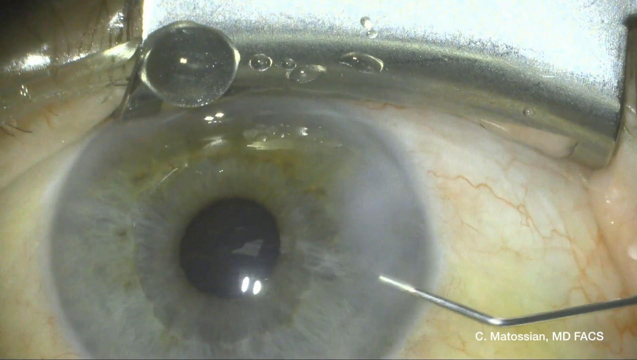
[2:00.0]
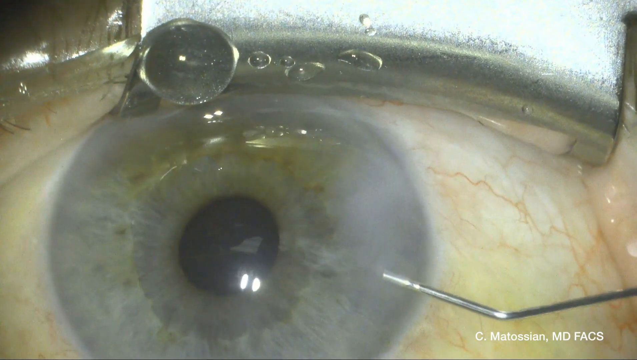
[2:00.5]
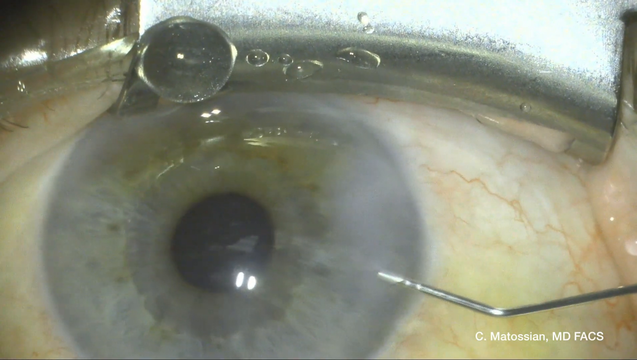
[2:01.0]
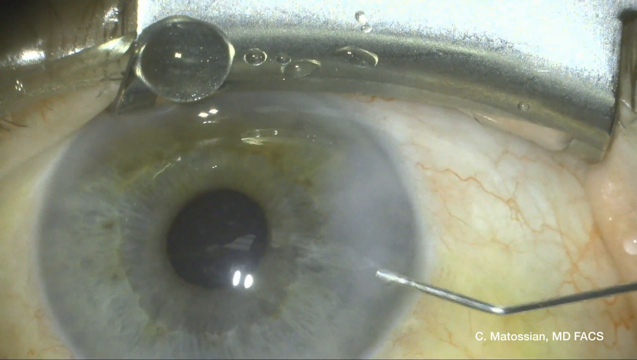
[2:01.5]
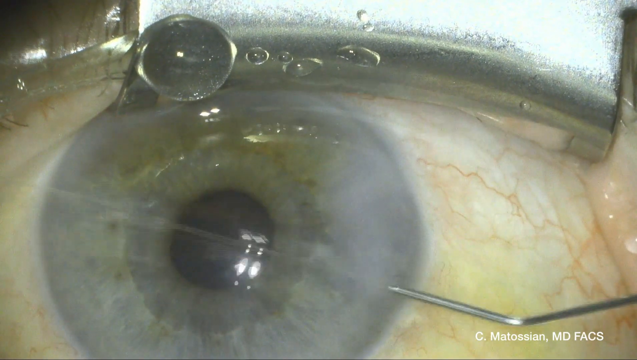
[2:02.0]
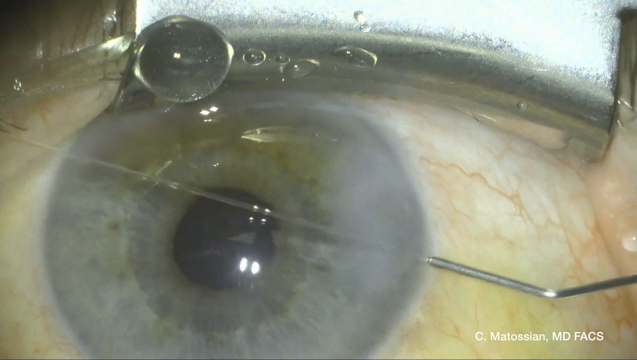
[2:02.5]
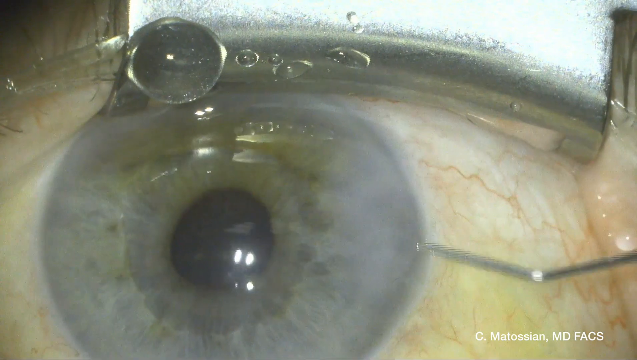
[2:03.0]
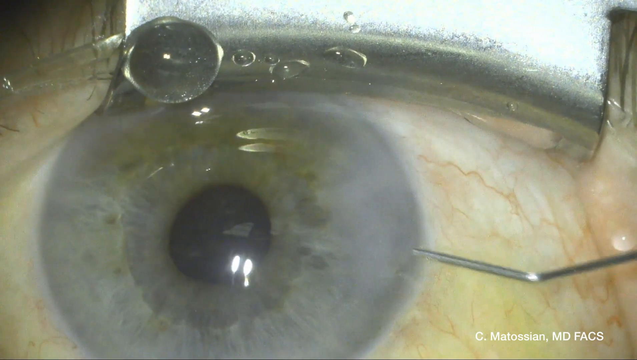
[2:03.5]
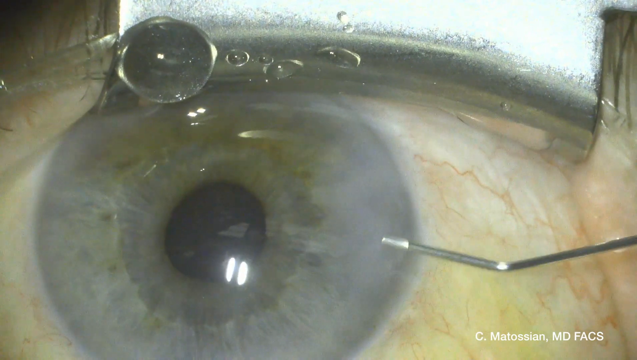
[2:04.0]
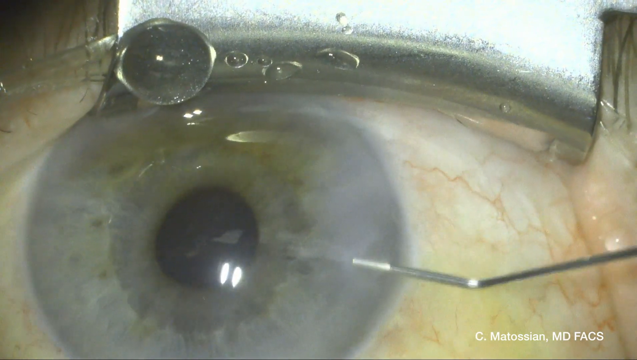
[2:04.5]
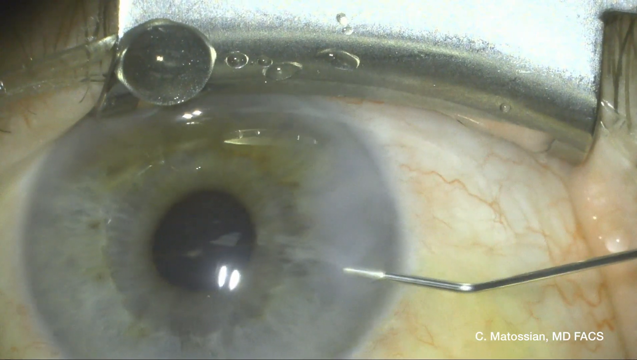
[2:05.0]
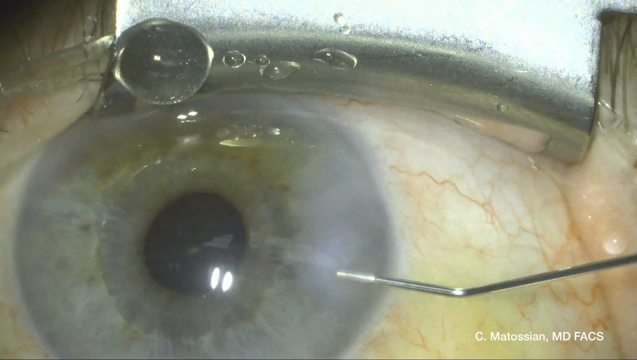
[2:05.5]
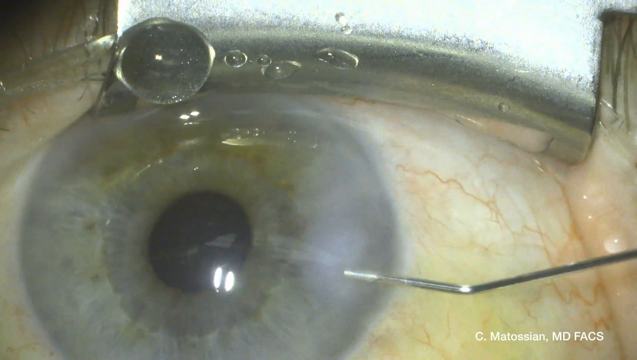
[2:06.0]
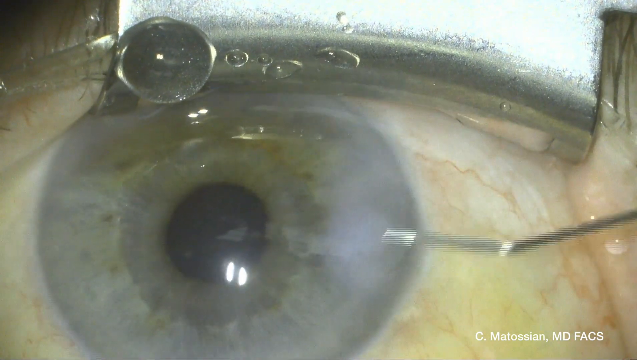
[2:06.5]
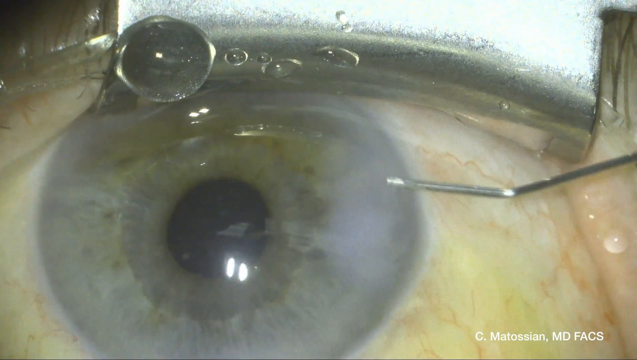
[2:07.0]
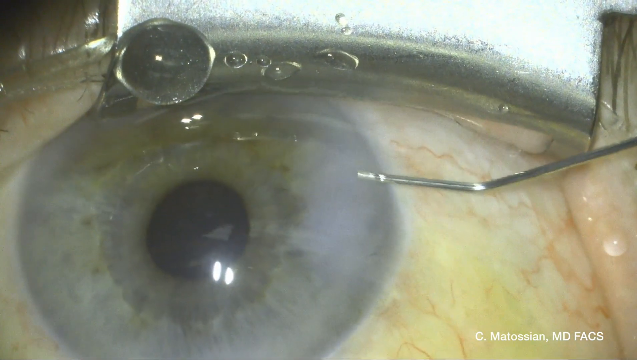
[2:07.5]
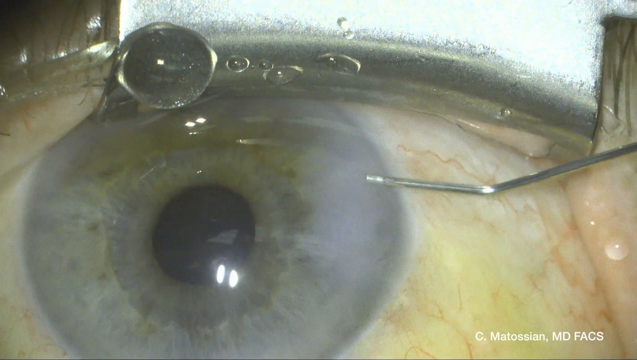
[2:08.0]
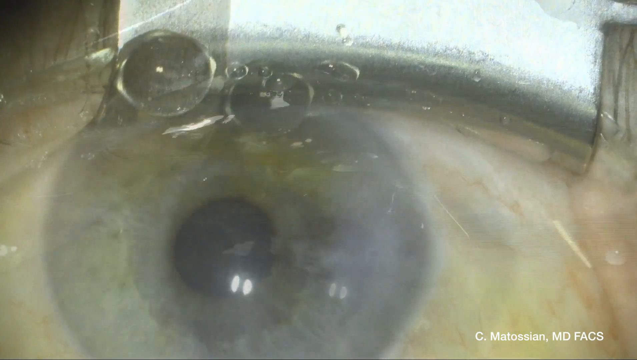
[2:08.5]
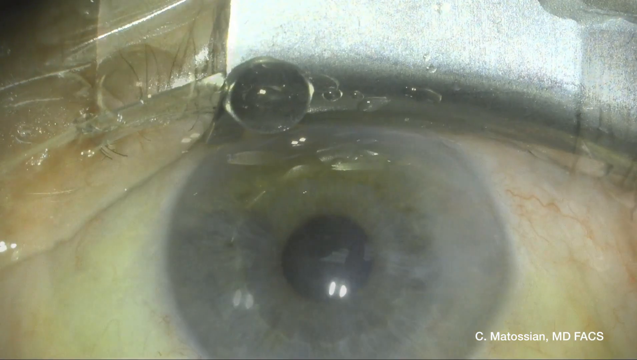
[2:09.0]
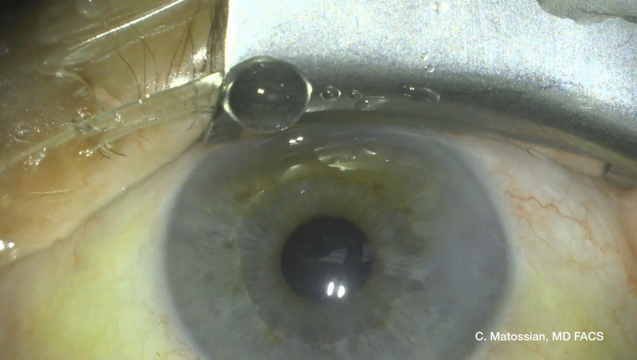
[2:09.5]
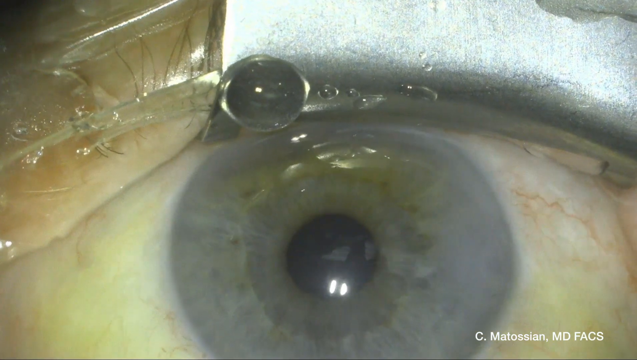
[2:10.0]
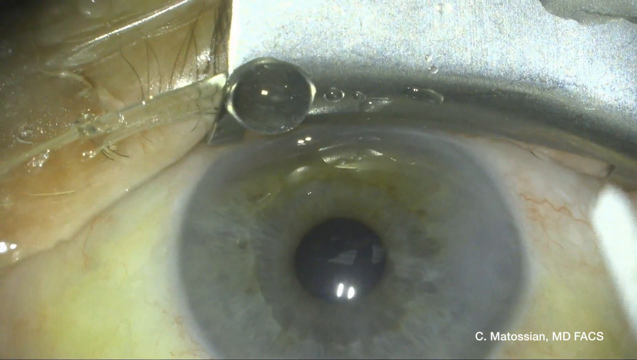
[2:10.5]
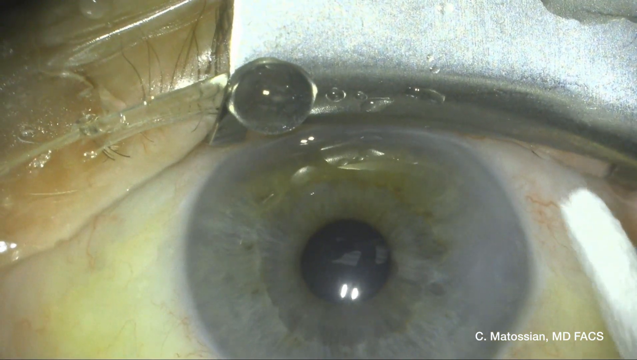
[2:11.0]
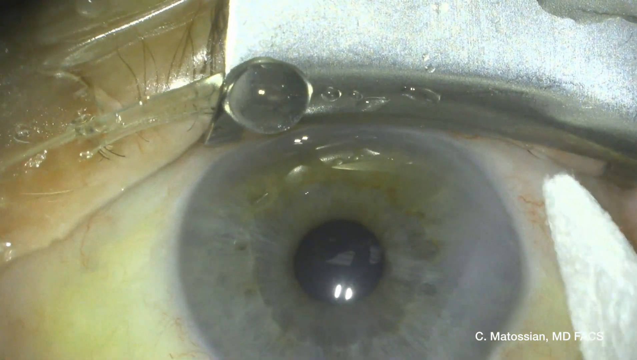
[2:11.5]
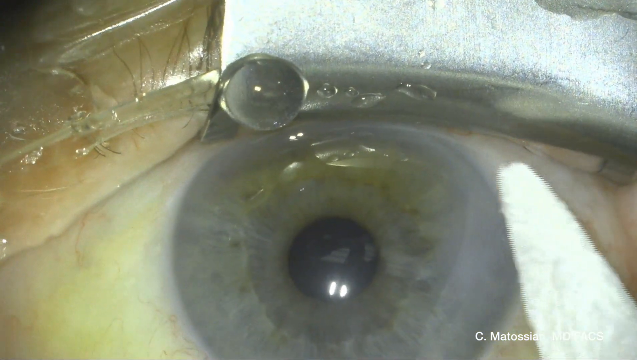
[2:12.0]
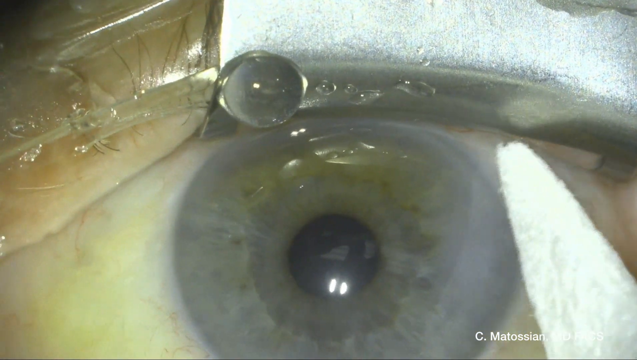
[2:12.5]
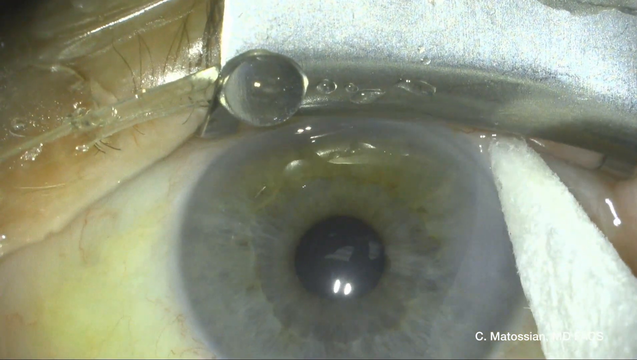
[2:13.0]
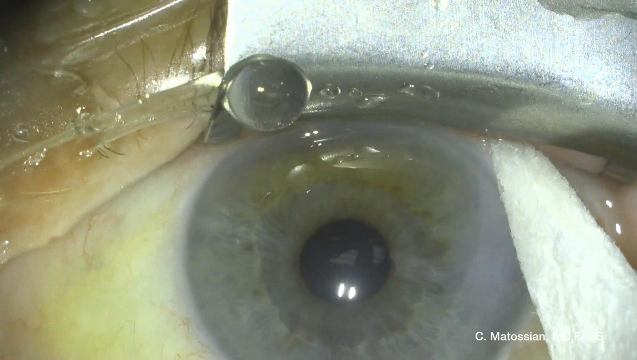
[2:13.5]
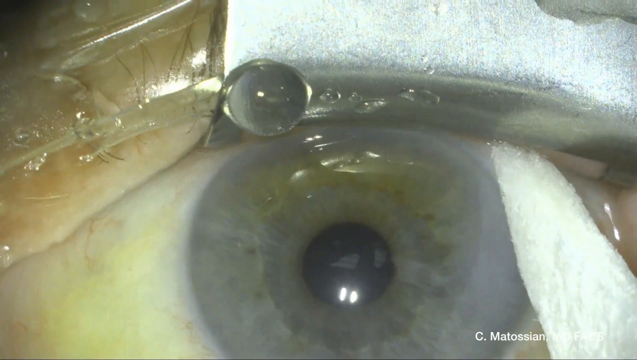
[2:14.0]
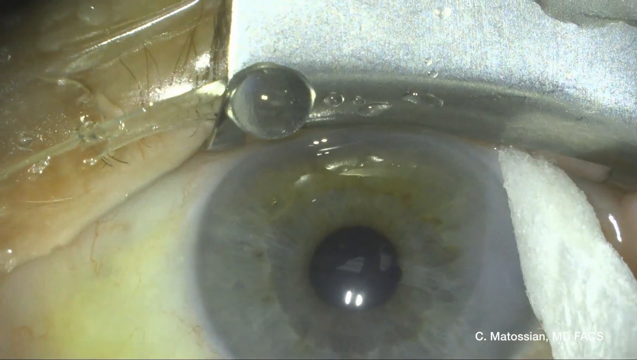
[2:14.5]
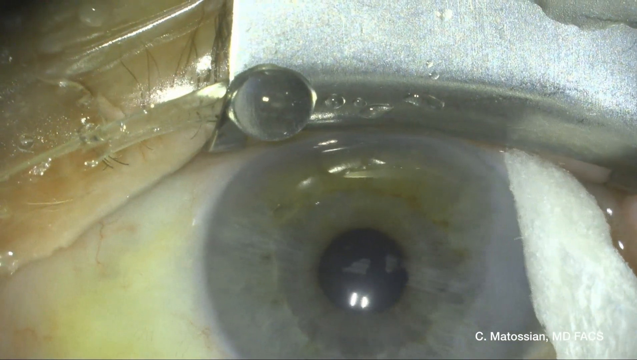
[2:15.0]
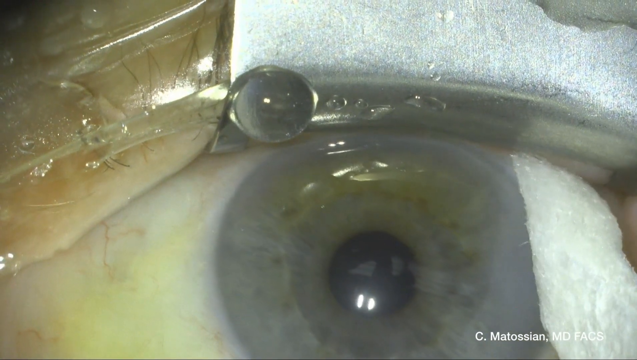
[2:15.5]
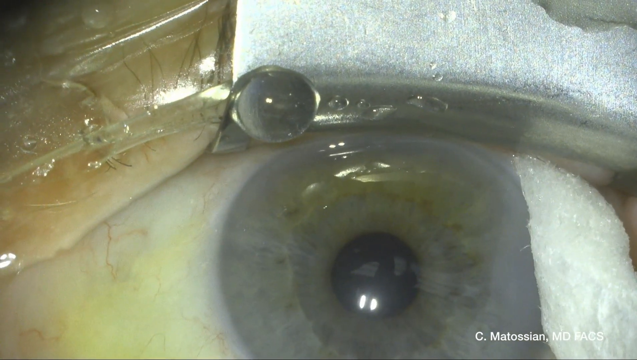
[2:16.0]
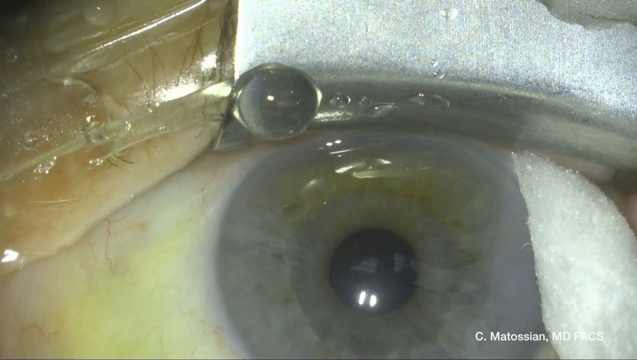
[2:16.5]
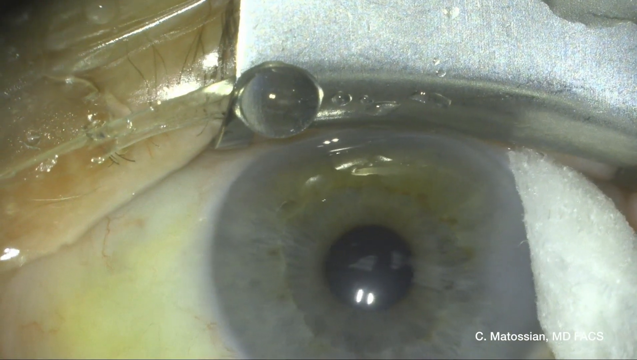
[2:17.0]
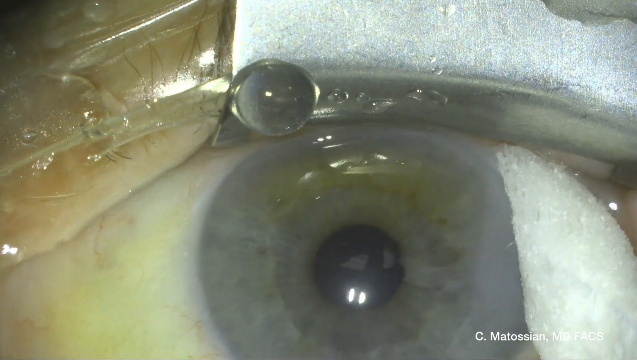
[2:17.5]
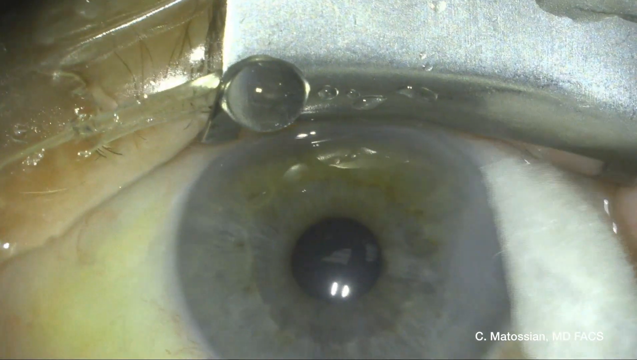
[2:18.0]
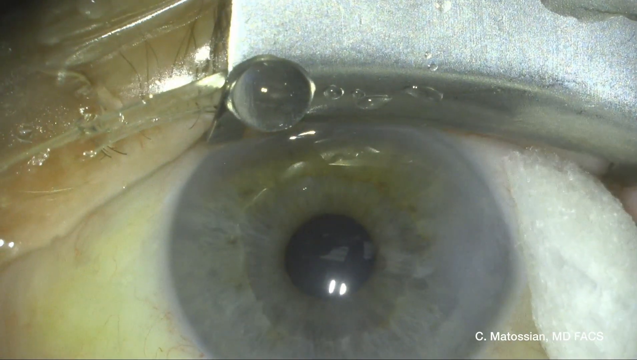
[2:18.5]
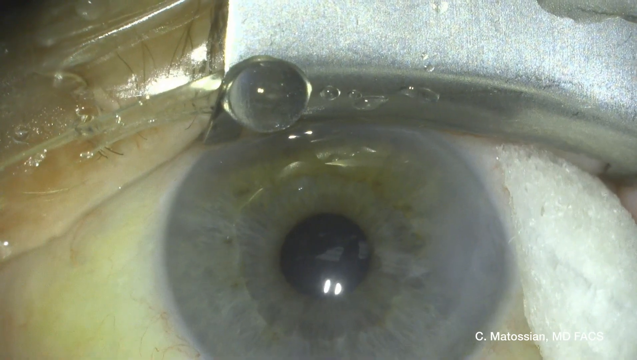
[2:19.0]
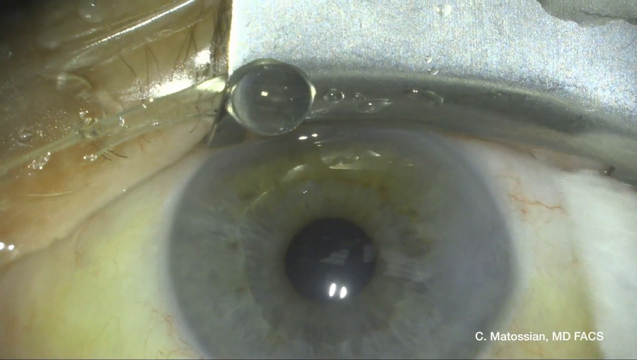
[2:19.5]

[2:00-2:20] An eye is being operated on, showing the blue iris, the black pupil, the white sclera with red veins running through it, and the inner eyelid held back by a metal piece in the upper right corner. A thin L-shaped or angled metallic piece comes from the lower right corner and presses under the iris from the right. The piece is yanked back twice, and then a line of water is fired through it, shooting clear directly to the left side of the frame through the eye. The line of water ends and the piece is lowered and pulled back a little. It is then raised to the upper right part of the eye and pulled out completely, with water sprayed as it is pulled out. The view shifts to another angle of the eye. A white object is now visible, placed under the point where the metallic piece meets the eye. The white tool is pressed to the right and then pulled back.